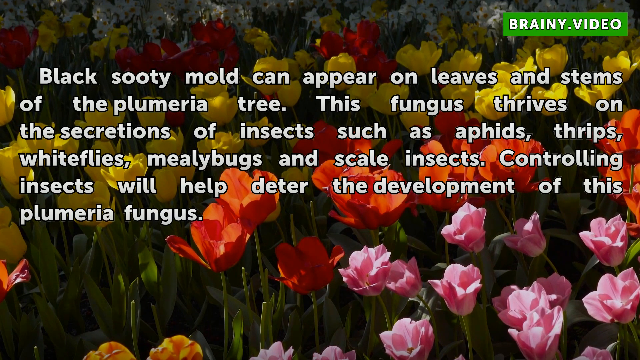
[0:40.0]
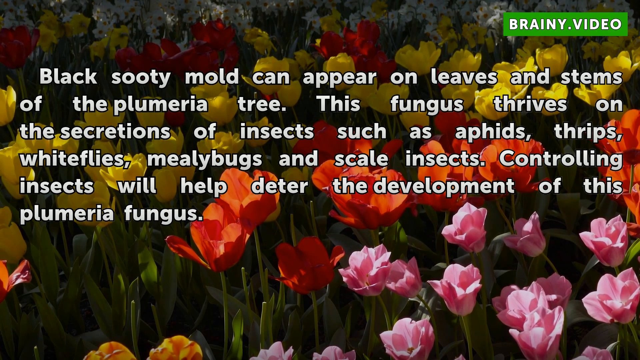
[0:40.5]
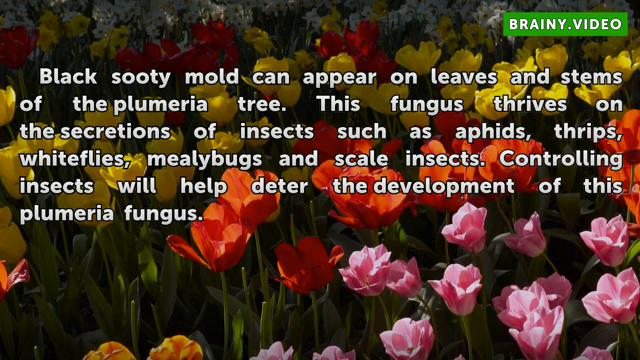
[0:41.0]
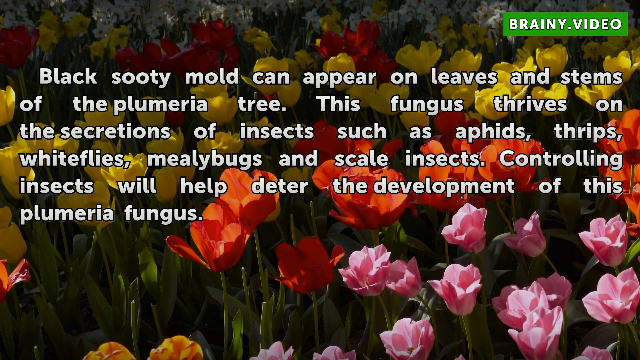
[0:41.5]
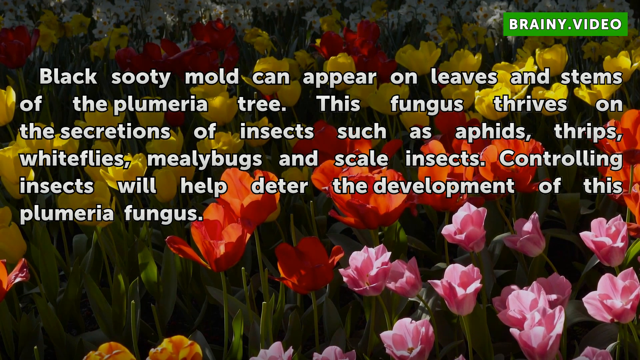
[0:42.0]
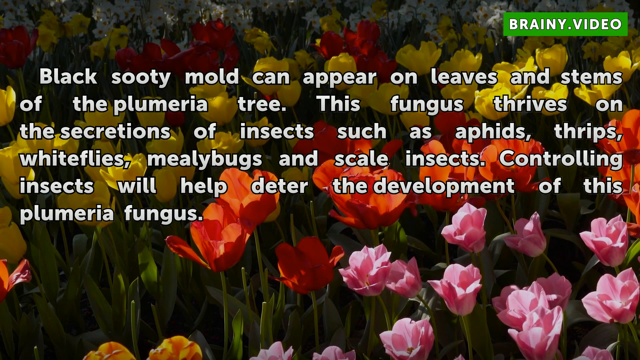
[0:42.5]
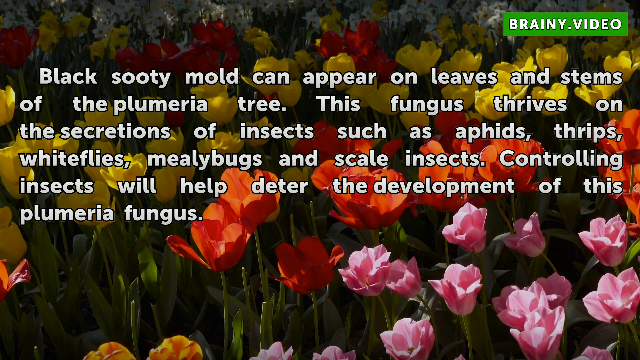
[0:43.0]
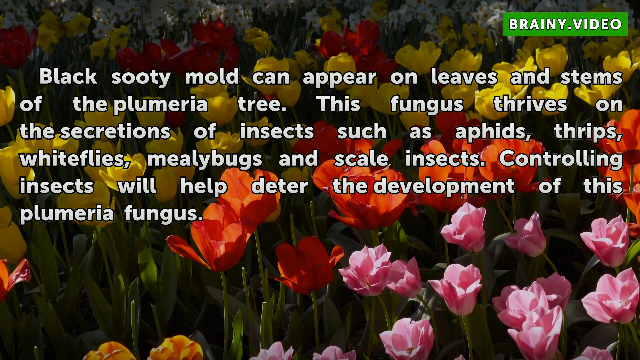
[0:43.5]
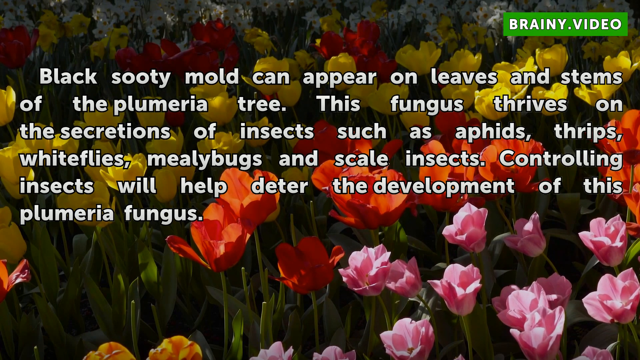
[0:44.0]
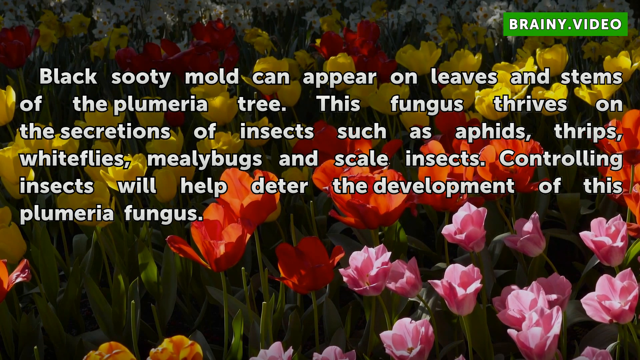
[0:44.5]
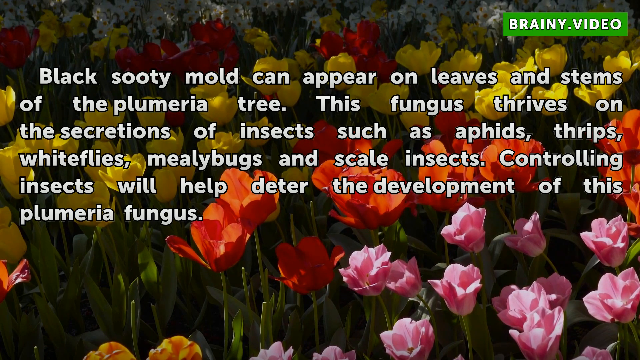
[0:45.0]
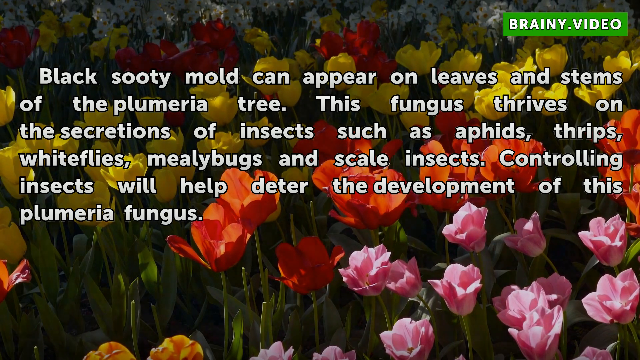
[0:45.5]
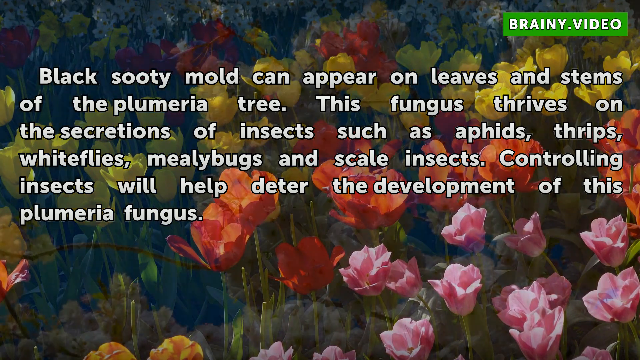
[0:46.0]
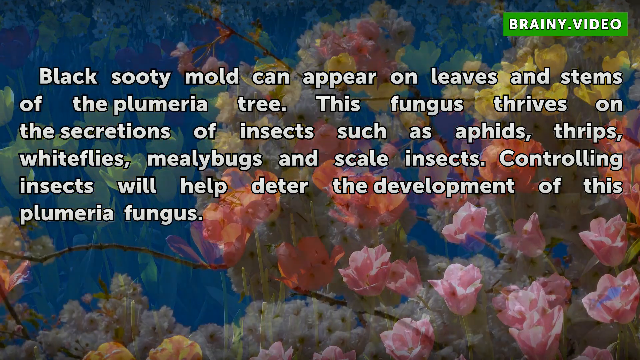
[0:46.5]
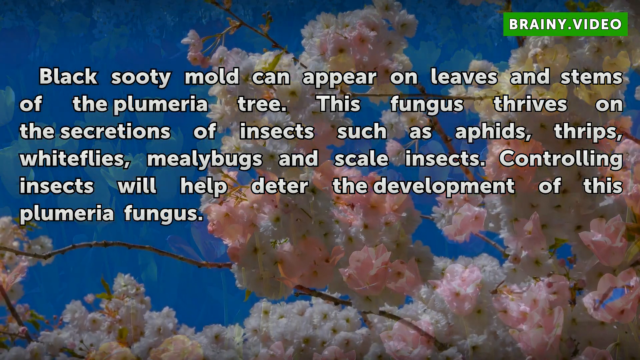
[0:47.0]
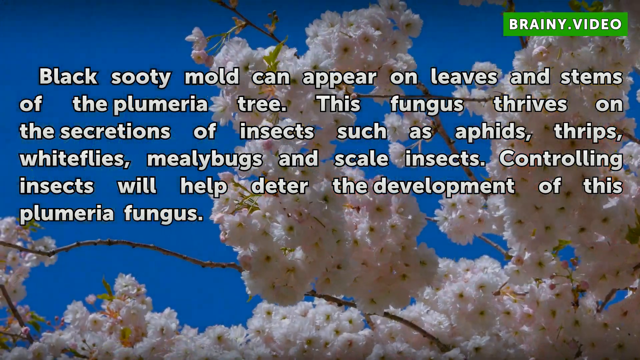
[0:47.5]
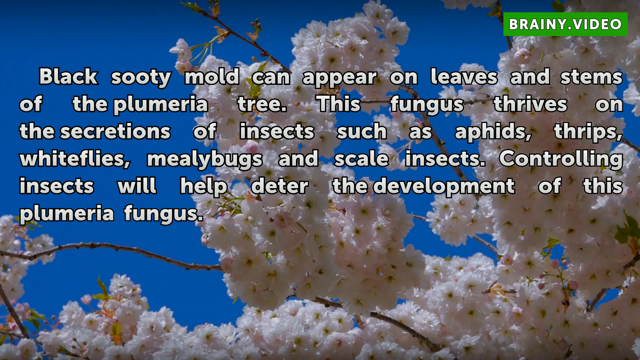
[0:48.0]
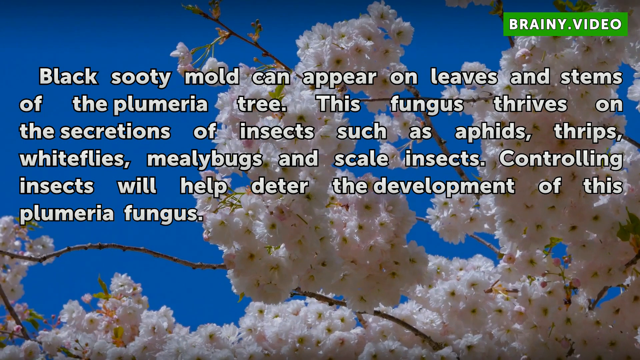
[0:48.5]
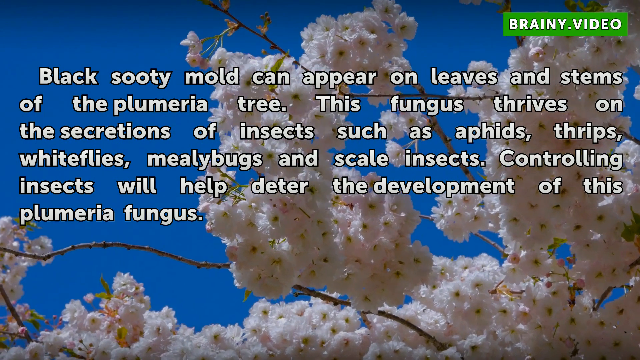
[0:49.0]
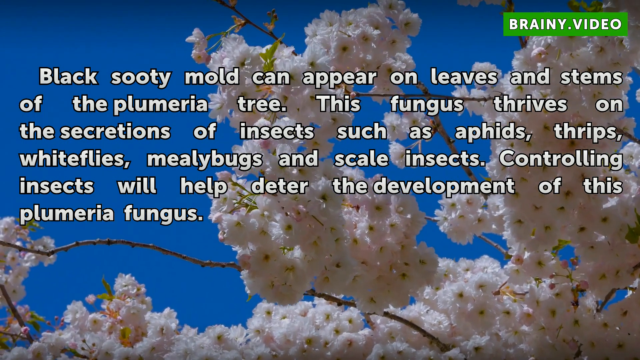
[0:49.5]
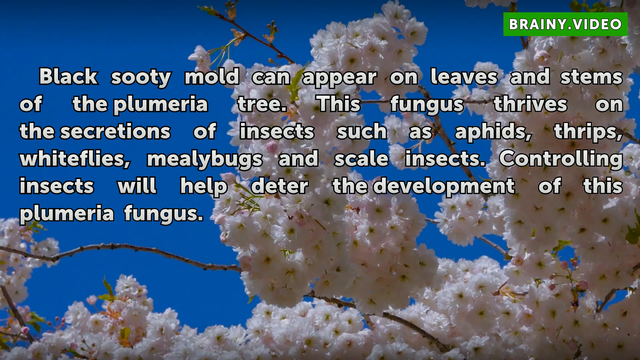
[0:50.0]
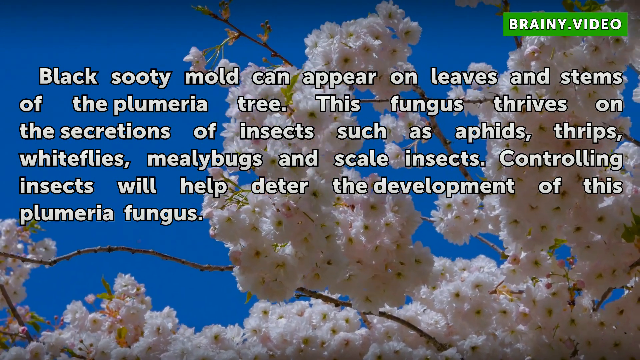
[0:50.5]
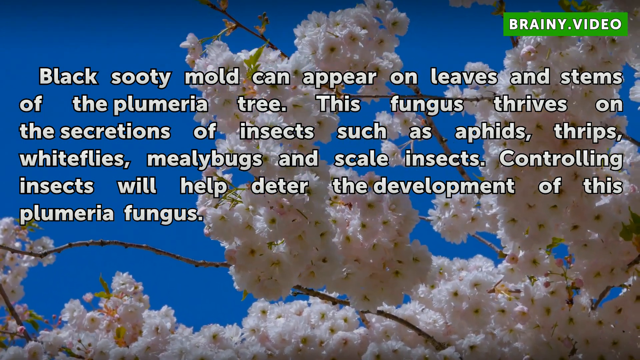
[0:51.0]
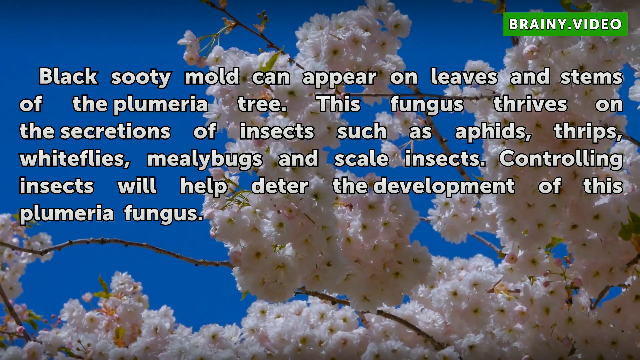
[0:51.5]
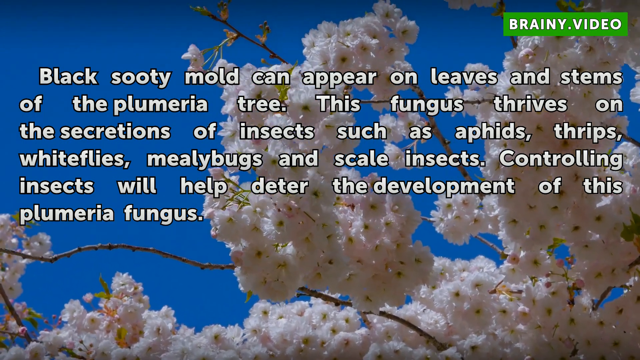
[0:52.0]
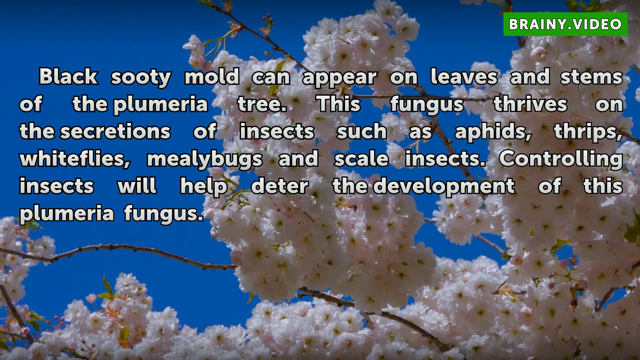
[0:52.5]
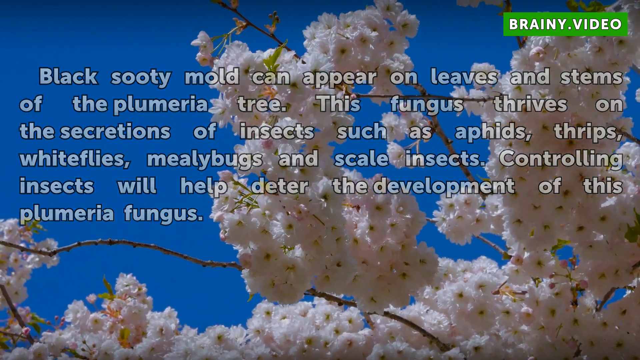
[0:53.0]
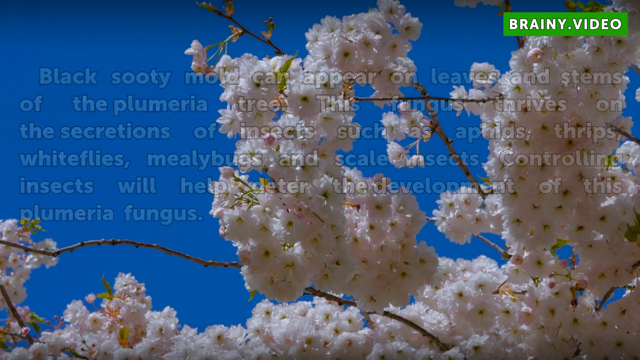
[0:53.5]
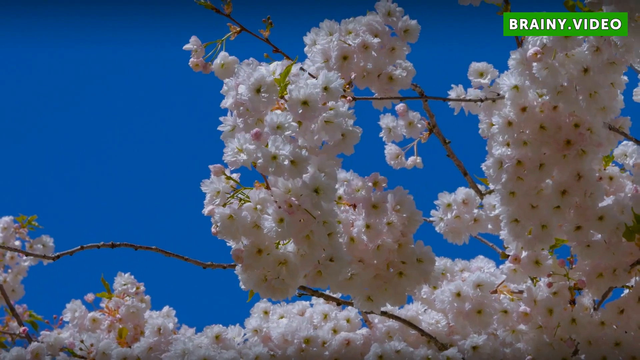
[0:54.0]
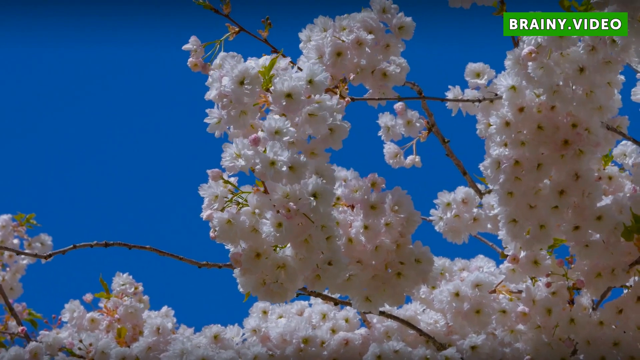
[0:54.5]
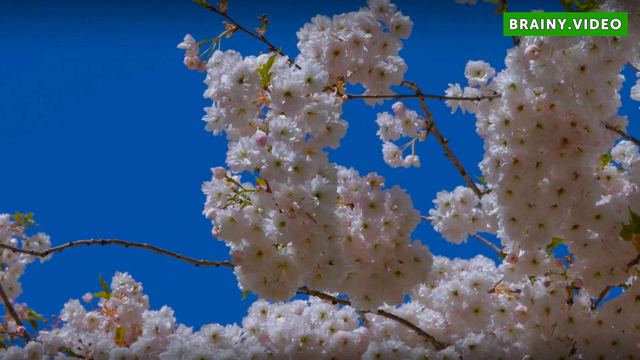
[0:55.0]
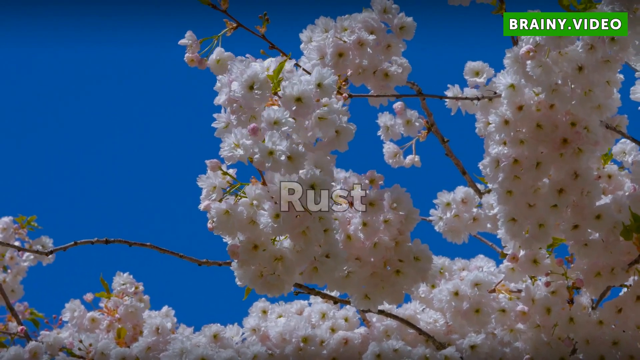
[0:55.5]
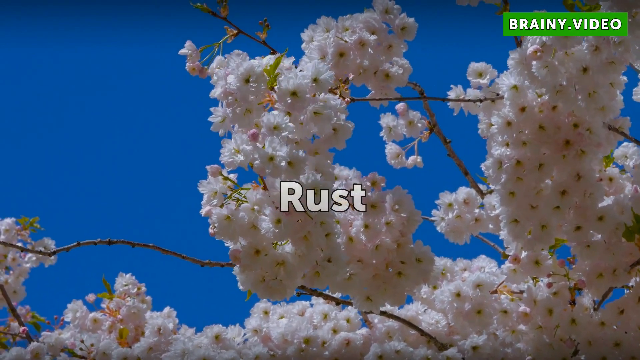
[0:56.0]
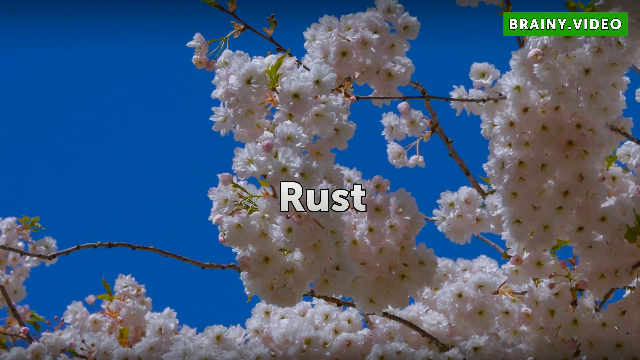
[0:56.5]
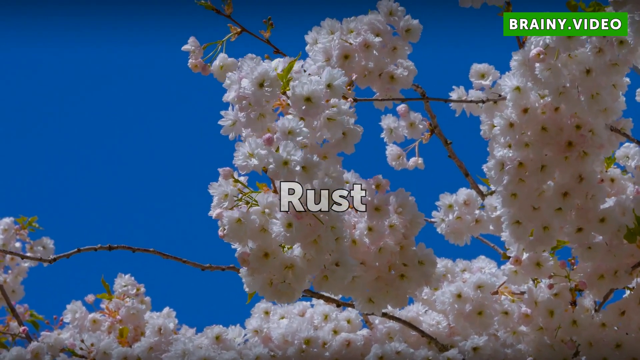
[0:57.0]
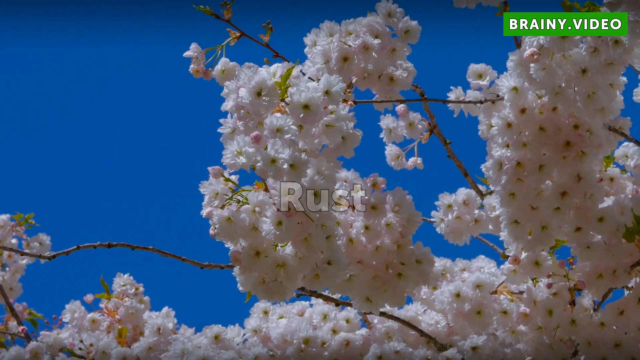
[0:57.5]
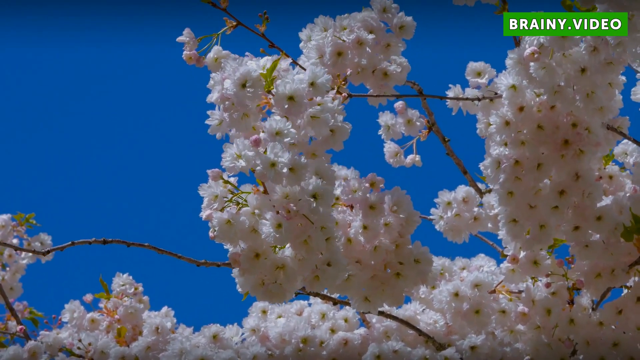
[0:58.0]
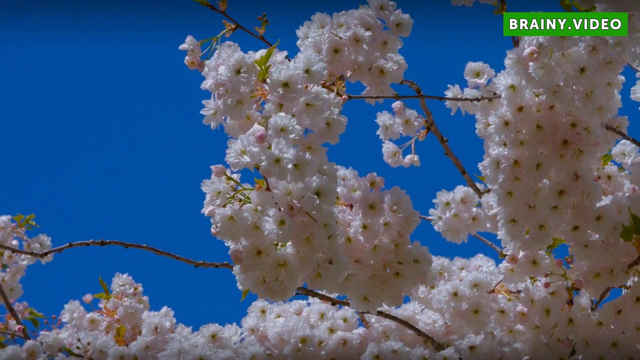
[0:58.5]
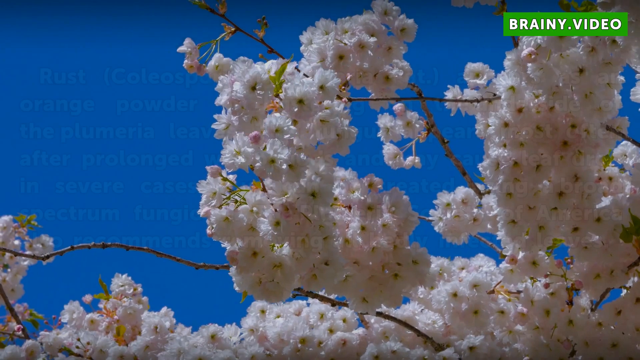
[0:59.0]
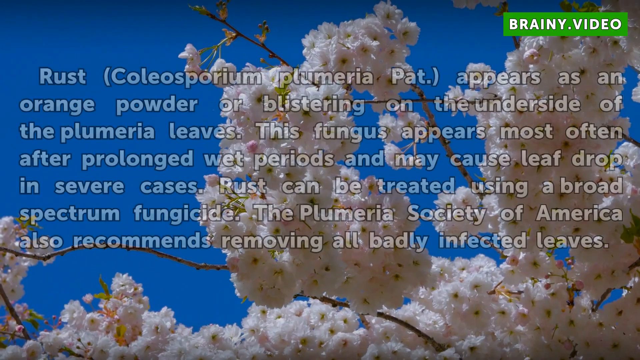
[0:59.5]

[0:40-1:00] The text about black sooty mold remains, describing how it can appear on the leaves and stems of the plumeria tree, thrives on the secretions of insects such as aphids, thrips, whiteflies, mealybugs and scale insects, and how controlling insects helps deter this plumeria fungus. The same text then appears on a different background. The word "Rust" is introduced as the next topic.